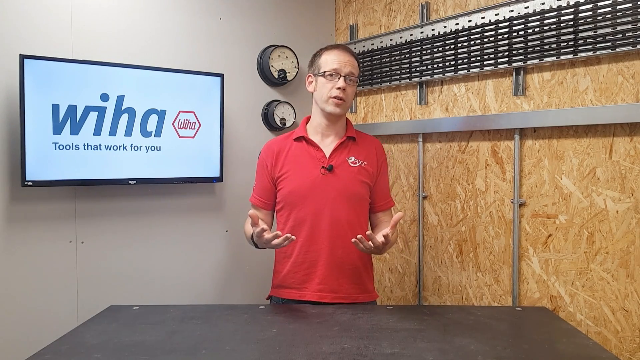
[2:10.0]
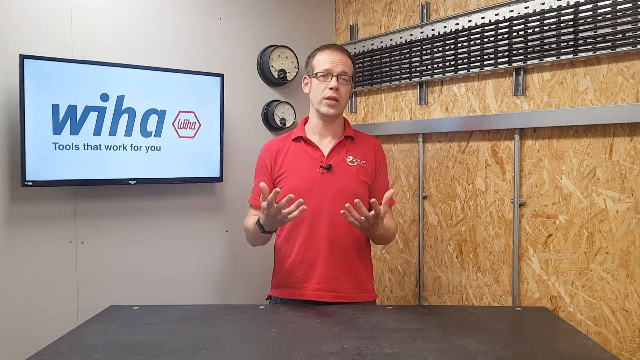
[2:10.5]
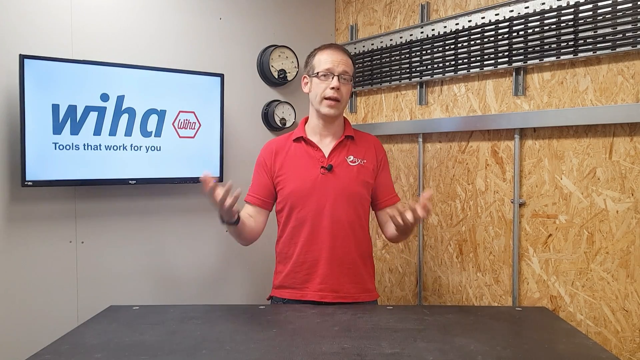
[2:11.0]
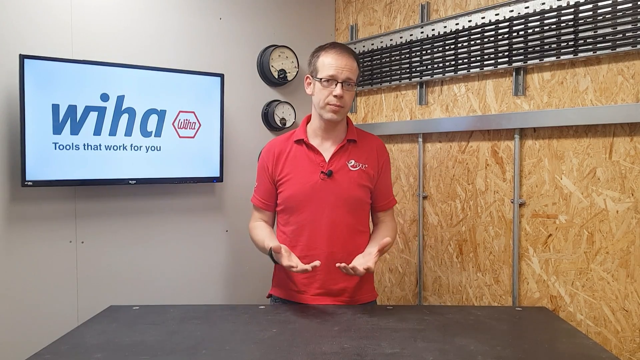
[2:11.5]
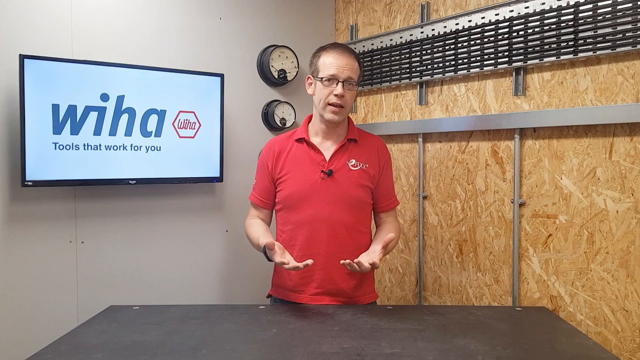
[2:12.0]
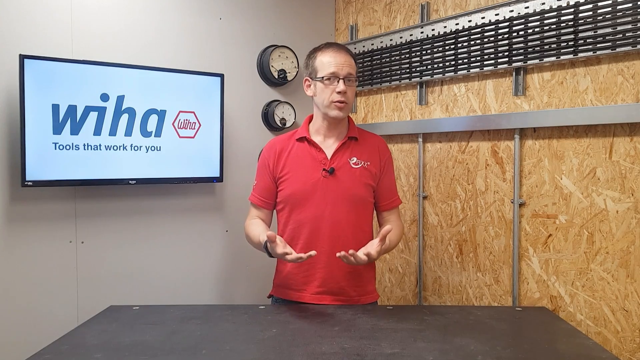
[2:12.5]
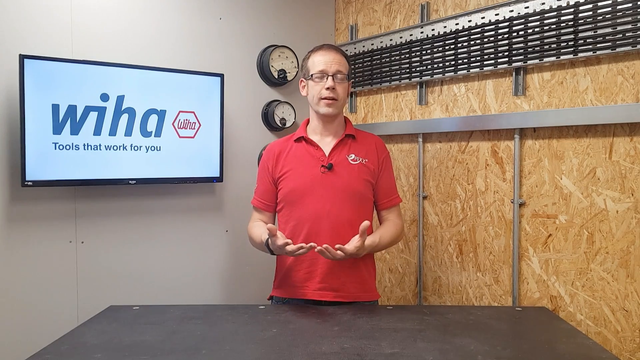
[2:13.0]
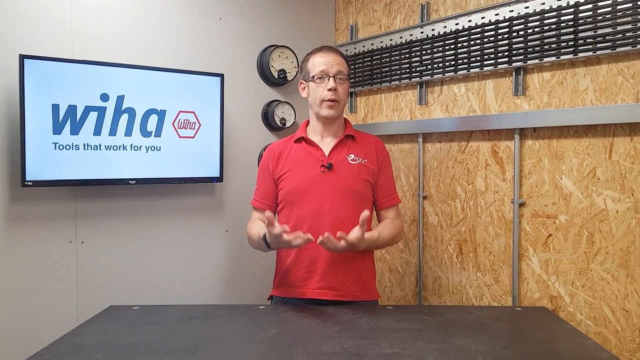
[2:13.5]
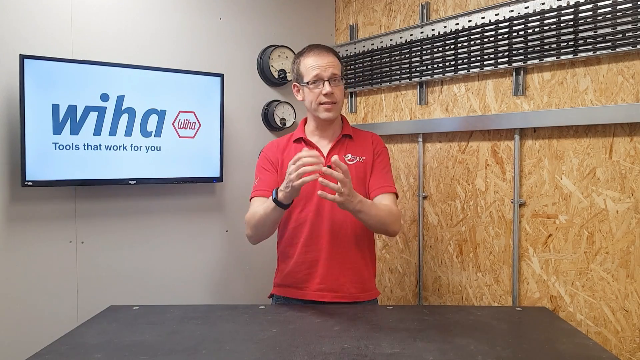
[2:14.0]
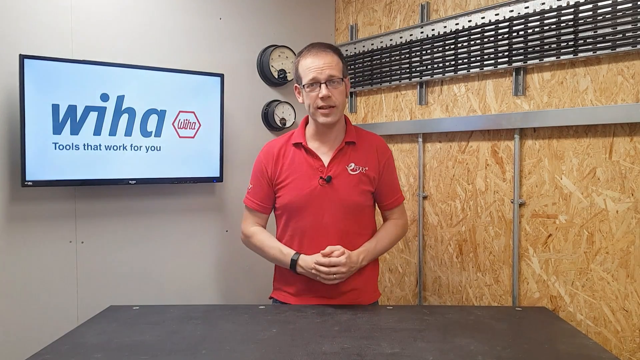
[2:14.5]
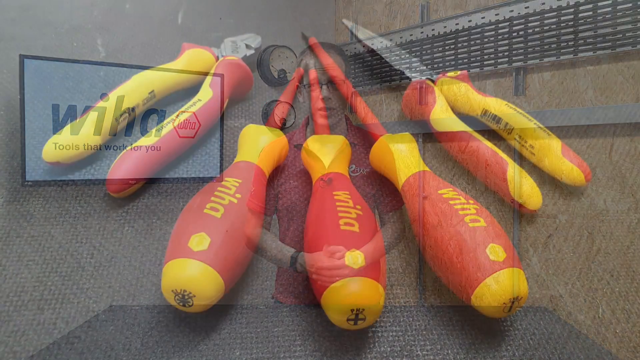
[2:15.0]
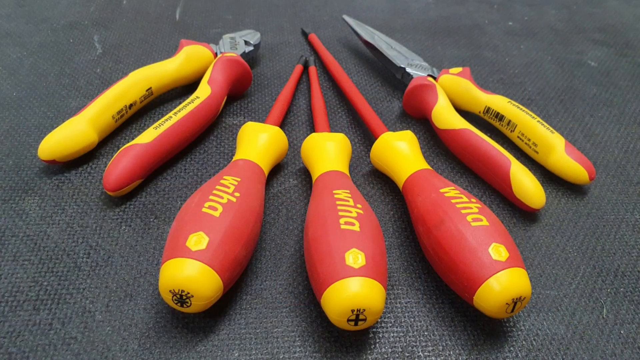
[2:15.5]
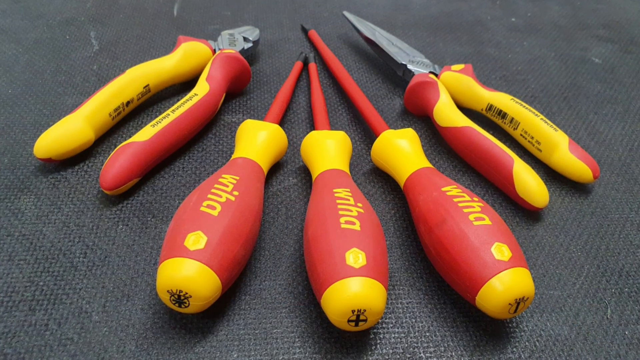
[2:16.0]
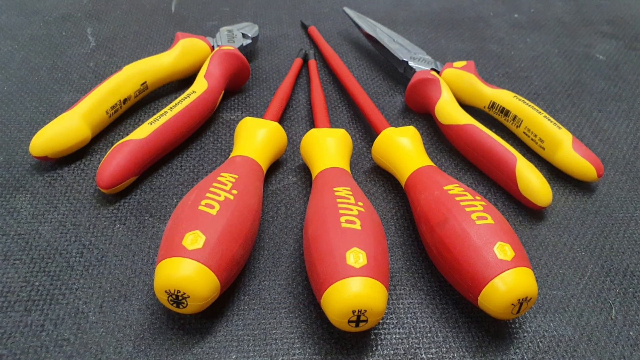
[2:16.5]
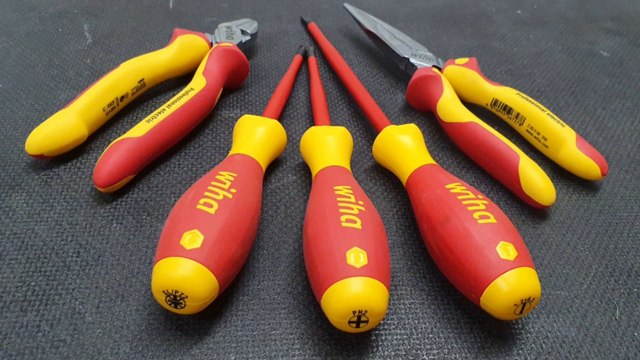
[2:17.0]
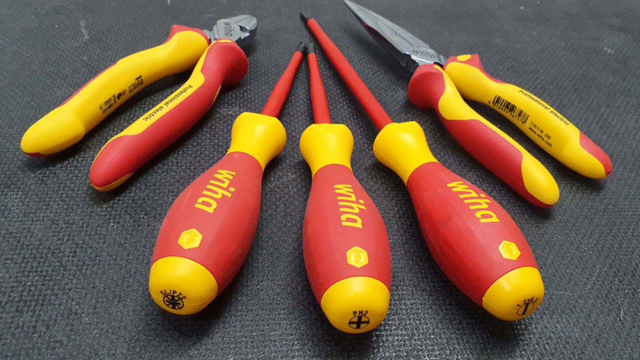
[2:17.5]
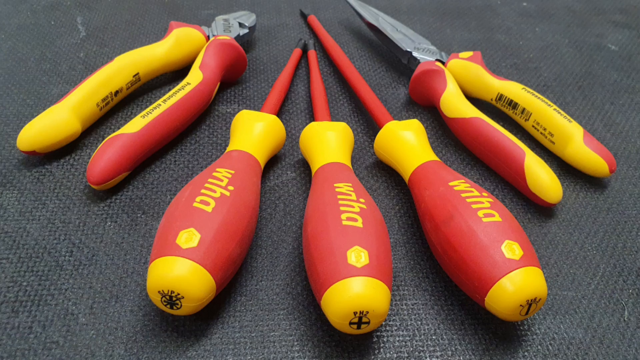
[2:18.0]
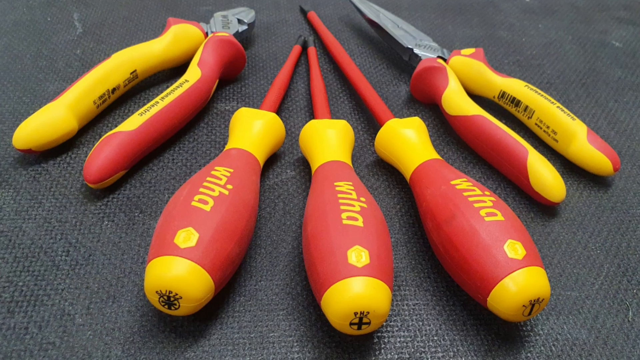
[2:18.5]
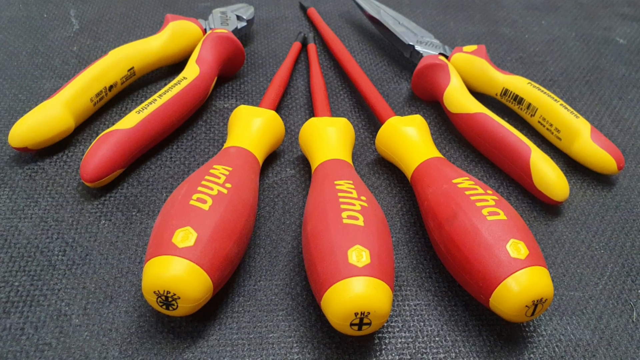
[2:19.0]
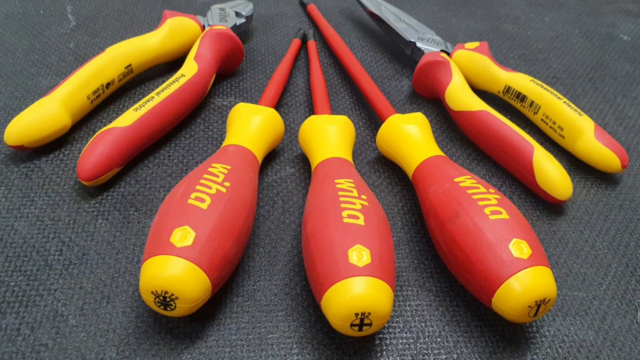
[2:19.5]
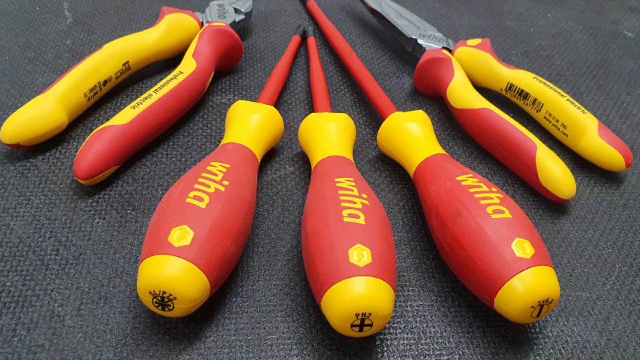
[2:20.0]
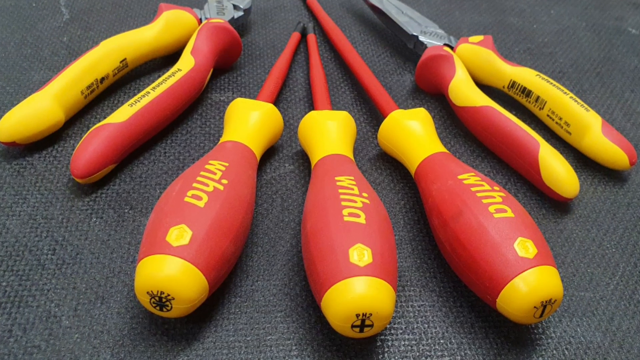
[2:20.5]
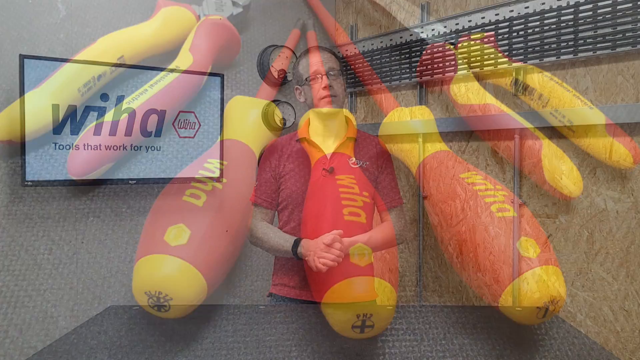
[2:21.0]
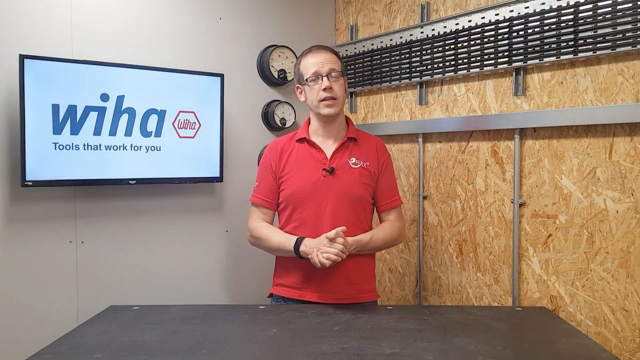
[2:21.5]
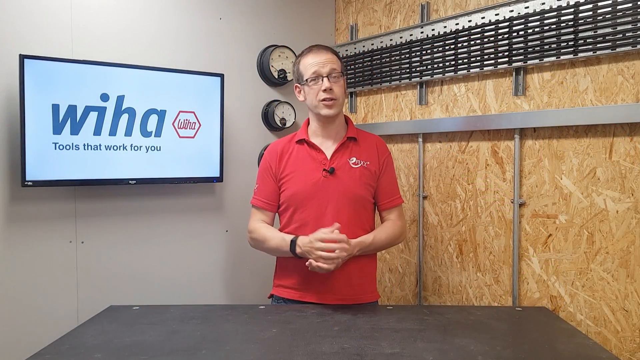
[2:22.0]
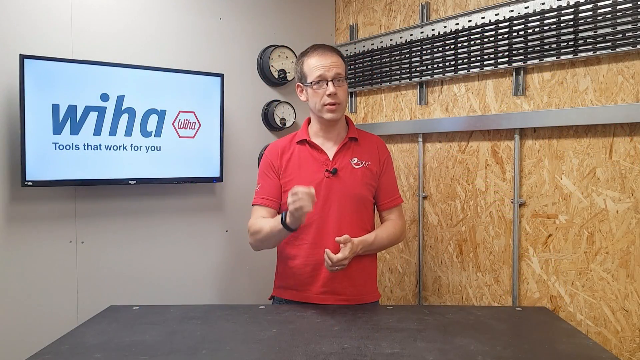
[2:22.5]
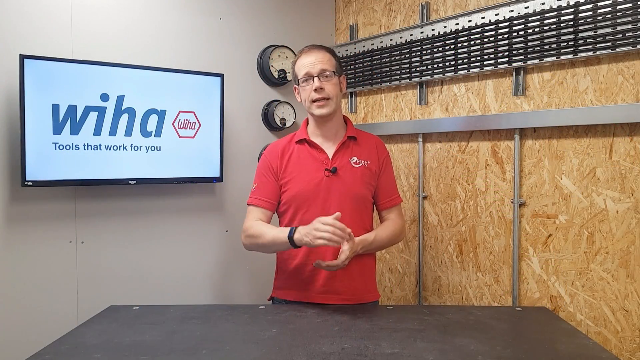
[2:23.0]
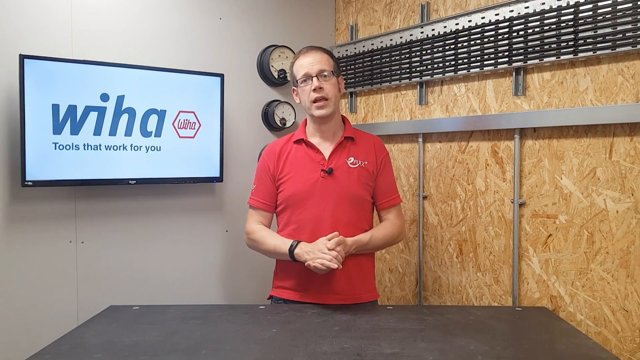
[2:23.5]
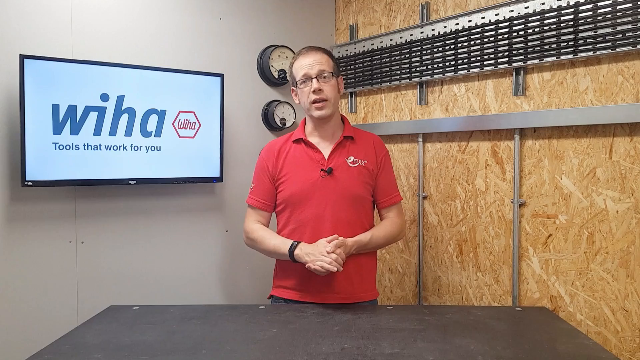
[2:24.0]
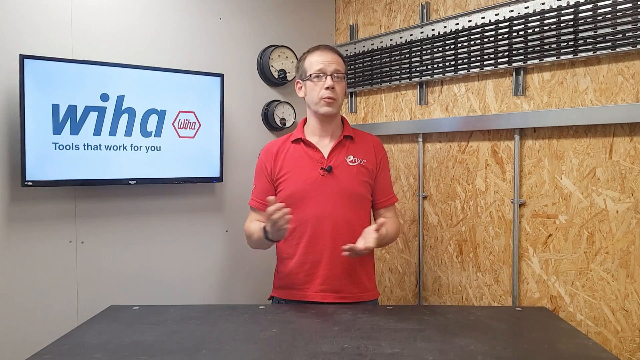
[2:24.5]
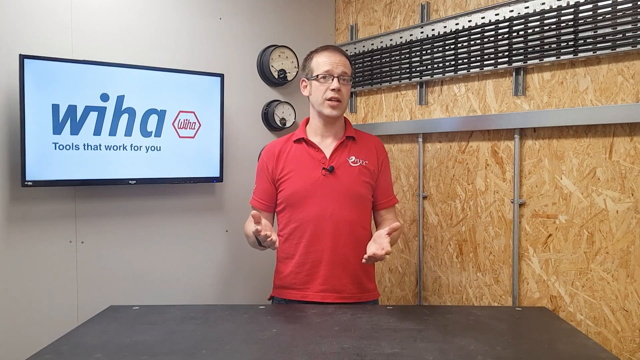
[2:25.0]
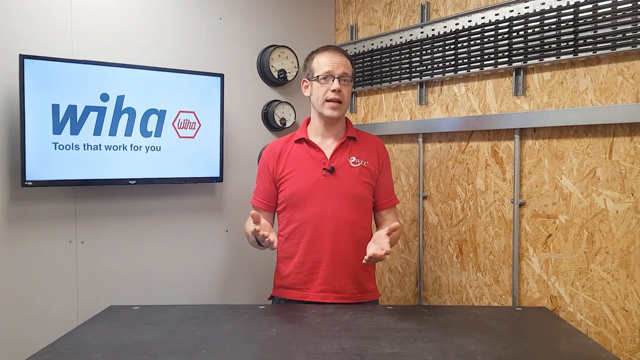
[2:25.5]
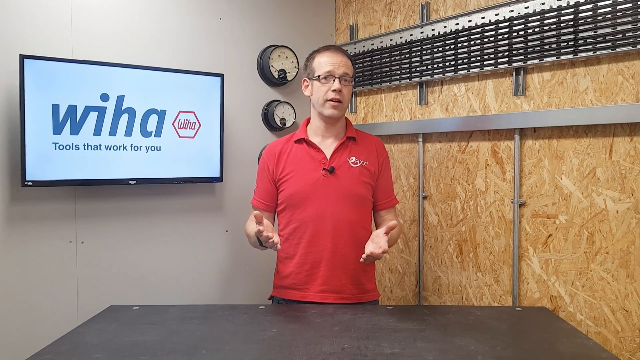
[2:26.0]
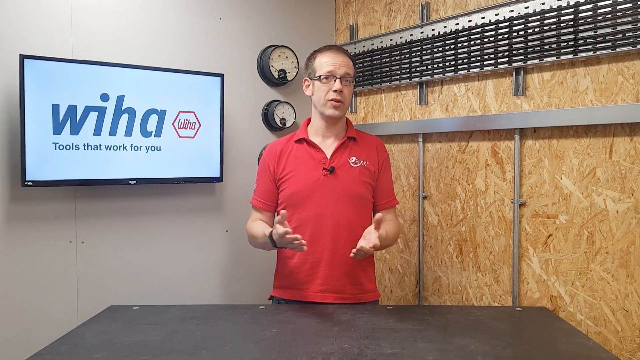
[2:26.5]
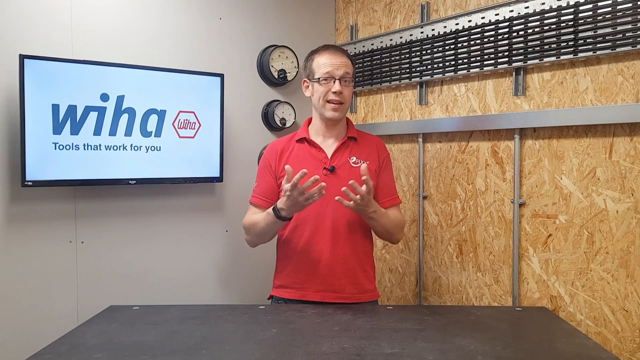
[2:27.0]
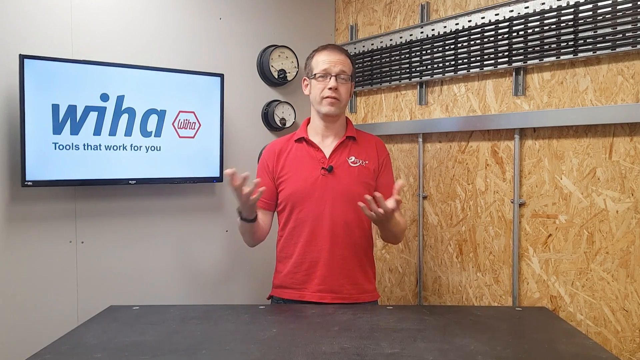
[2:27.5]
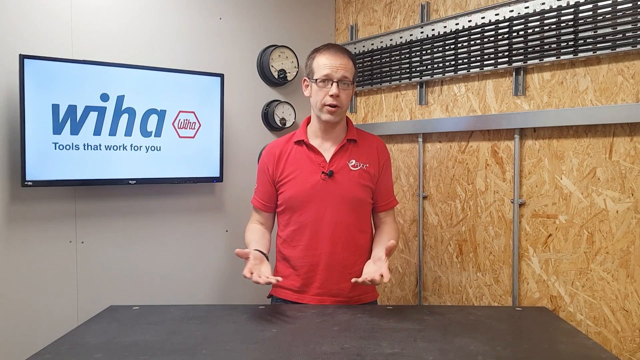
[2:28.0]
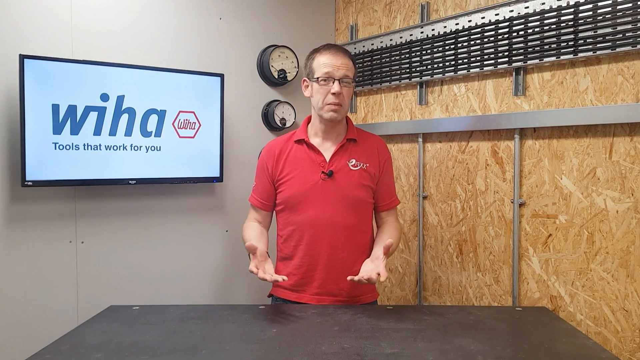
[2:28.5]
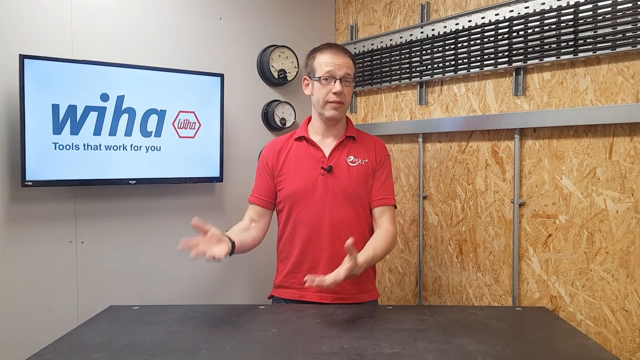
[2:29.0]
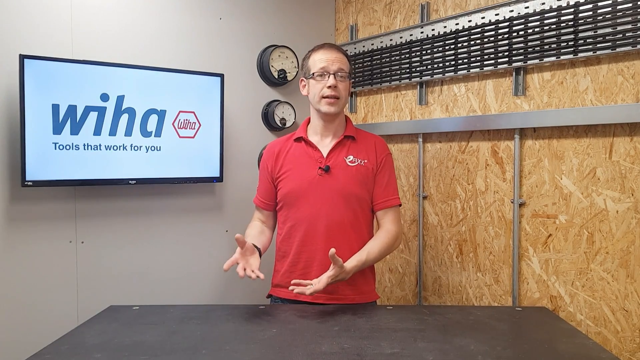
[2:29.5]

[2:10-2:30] The video starts with a close-up of the WIHA representative. A different view of the tools follows, showing six tools: cutting shears, flatheads, screwdrivers and a pair of pliers, with red and gold rubberized handles. The handles are large, kind of gold and reddish mixed together, with the company logo "WIHA" on the side, and the tools look strongly built. The man appears to be talking about the tools. He is in a garage, with a computer or monitor on the left side of a giant TV screen showing "WIHA" in black letters on a white background and black text below reading "tools that work for you." Three odd-shaped wall clocks are right behind him. On the right-hand side is a wooden wall with what may be some kind of TV mount racks for hanging things.